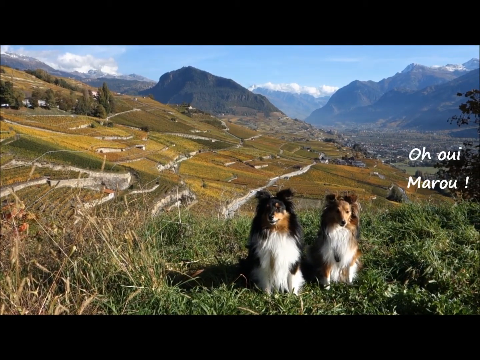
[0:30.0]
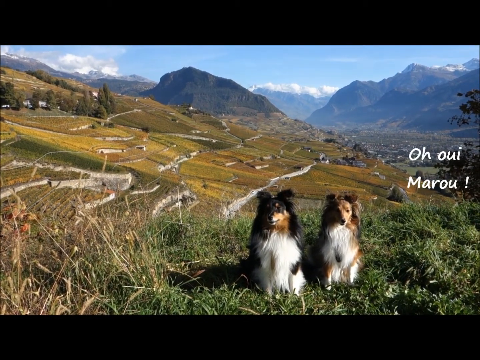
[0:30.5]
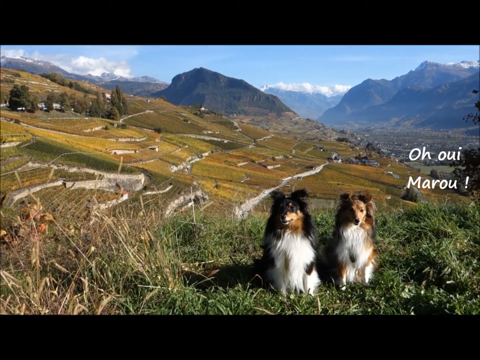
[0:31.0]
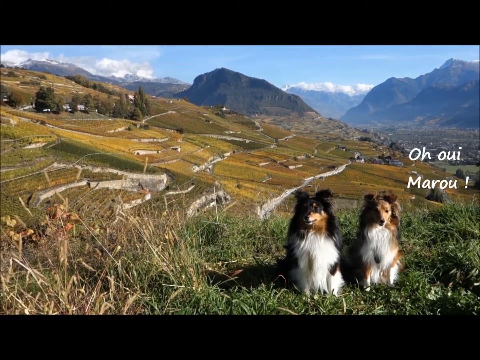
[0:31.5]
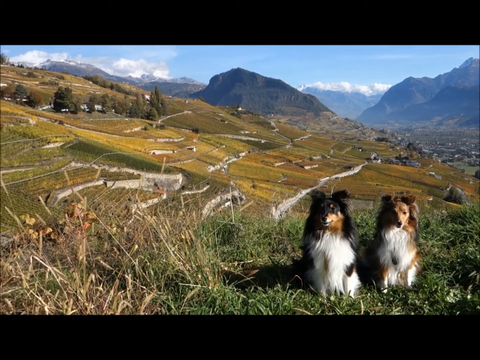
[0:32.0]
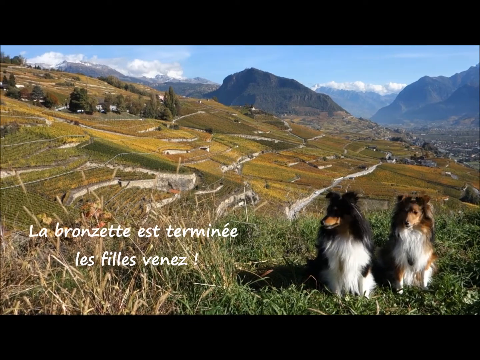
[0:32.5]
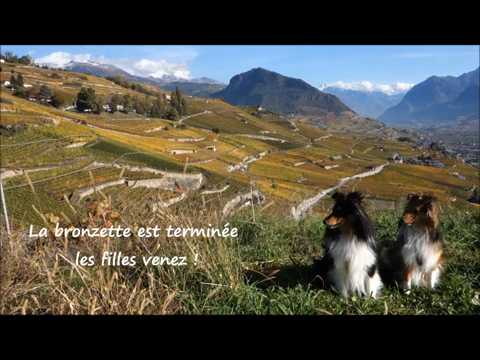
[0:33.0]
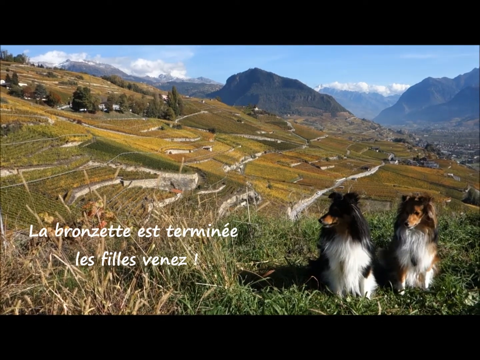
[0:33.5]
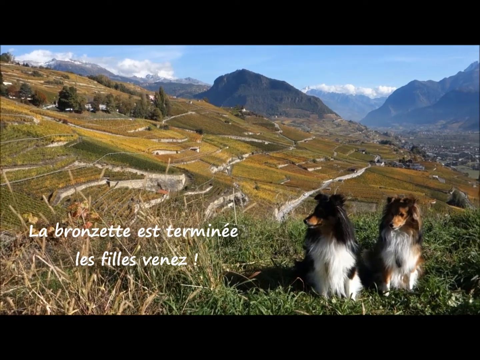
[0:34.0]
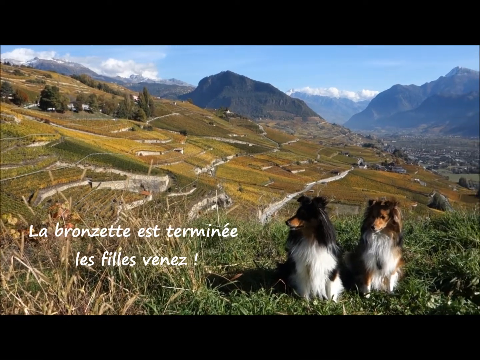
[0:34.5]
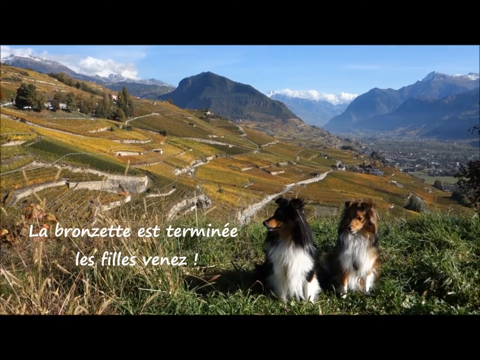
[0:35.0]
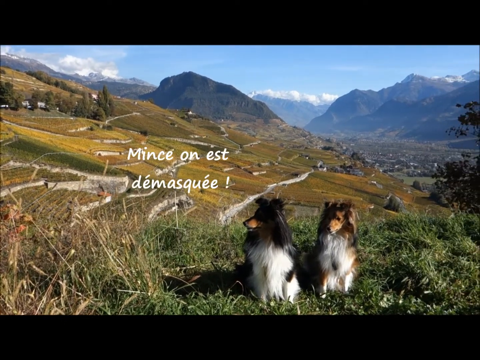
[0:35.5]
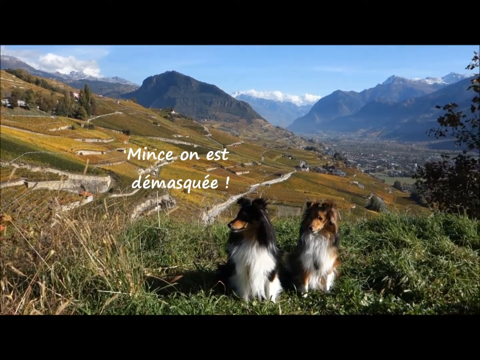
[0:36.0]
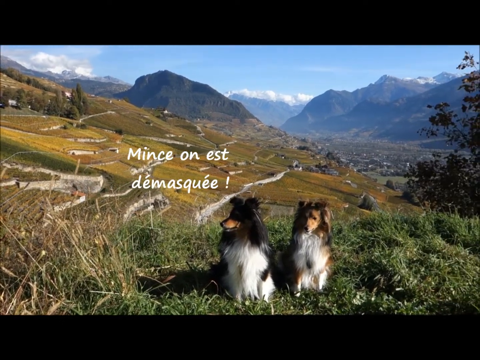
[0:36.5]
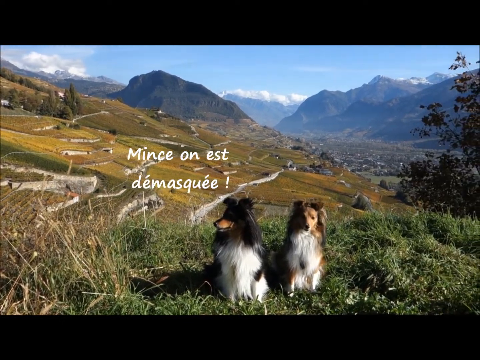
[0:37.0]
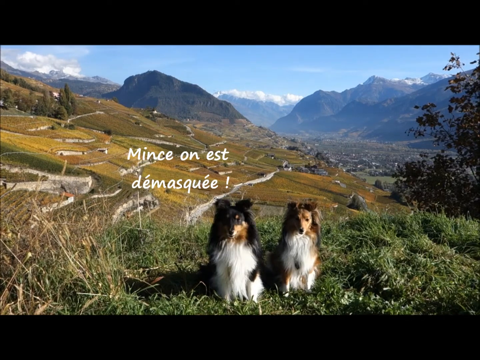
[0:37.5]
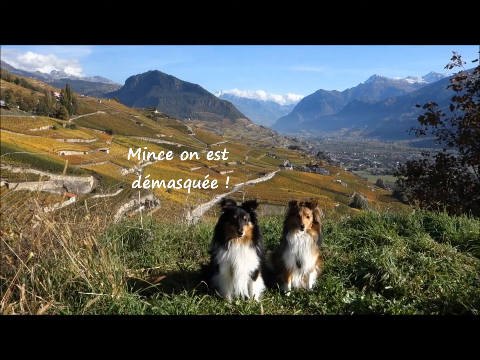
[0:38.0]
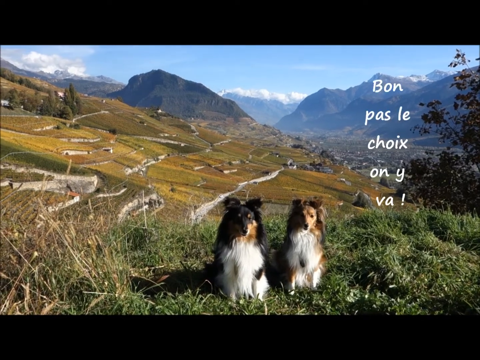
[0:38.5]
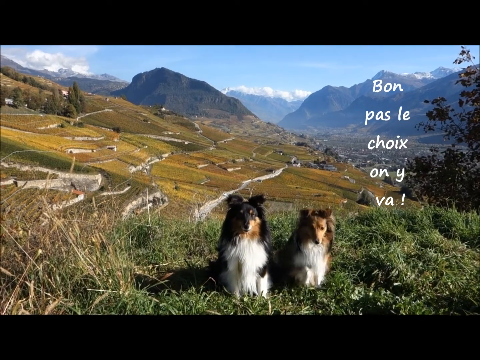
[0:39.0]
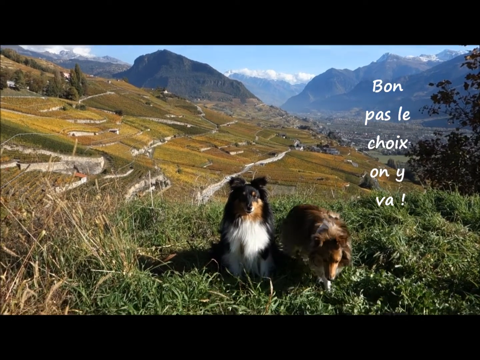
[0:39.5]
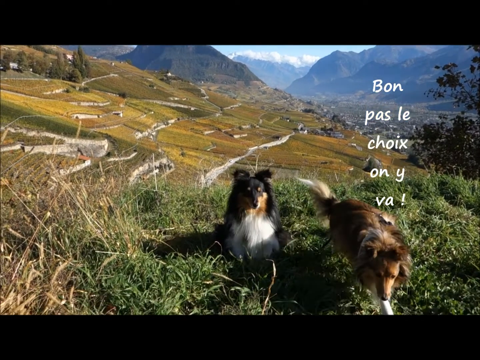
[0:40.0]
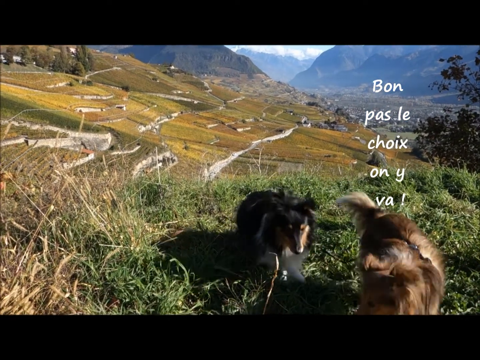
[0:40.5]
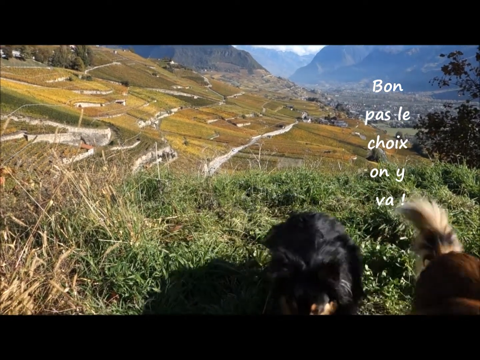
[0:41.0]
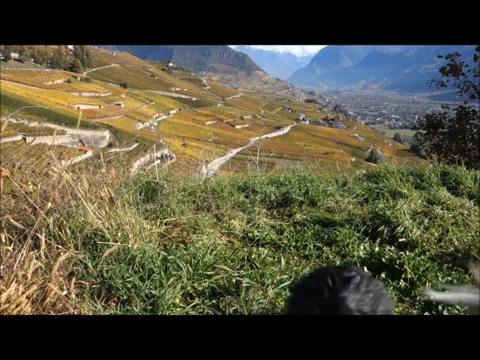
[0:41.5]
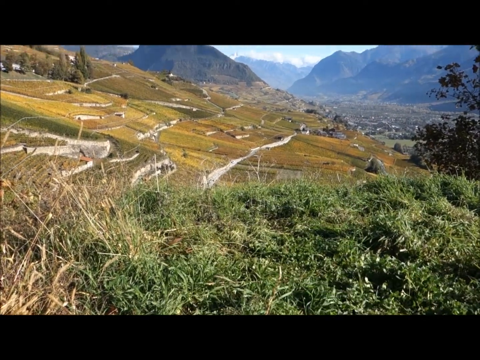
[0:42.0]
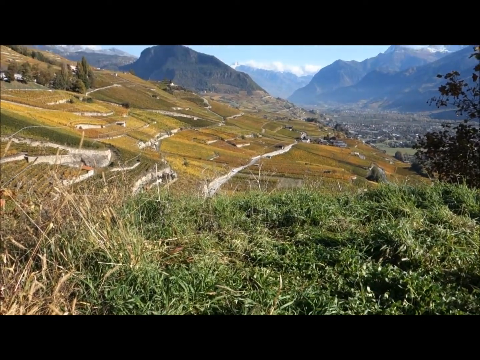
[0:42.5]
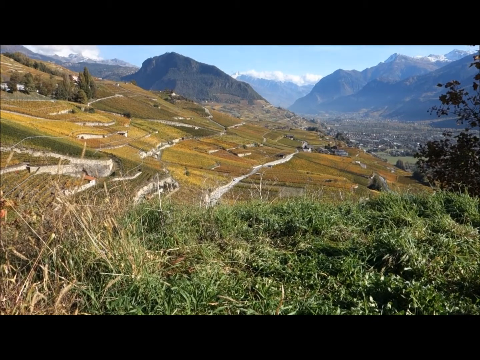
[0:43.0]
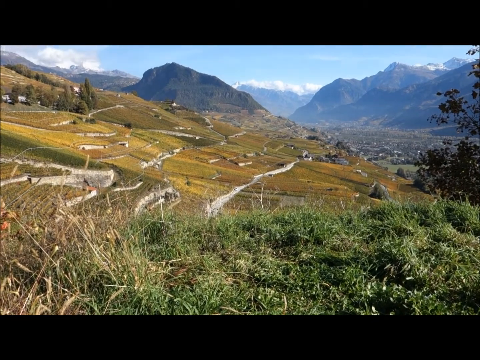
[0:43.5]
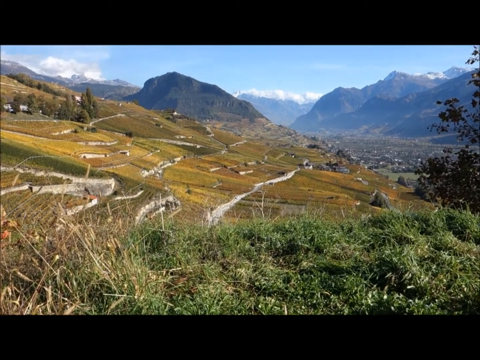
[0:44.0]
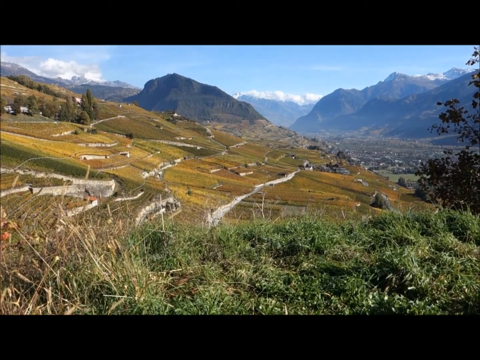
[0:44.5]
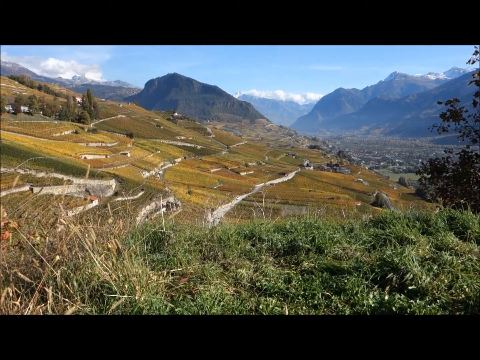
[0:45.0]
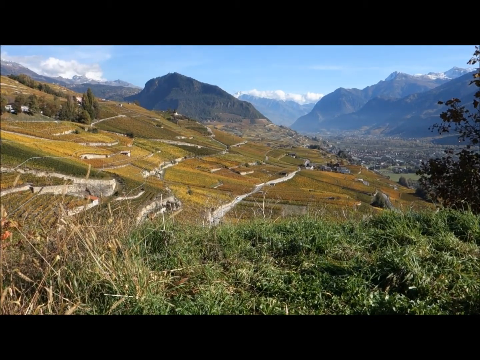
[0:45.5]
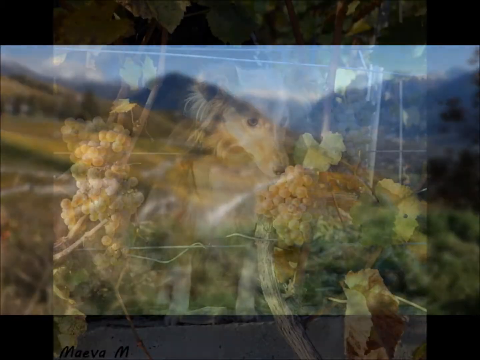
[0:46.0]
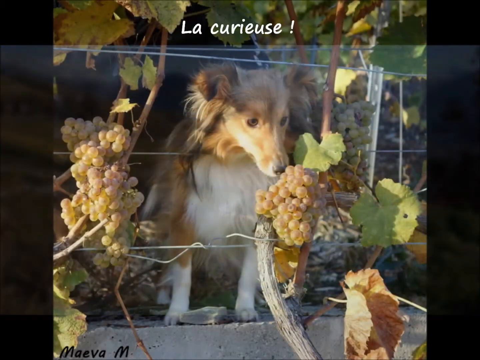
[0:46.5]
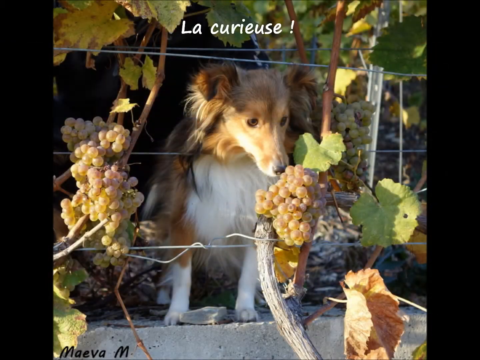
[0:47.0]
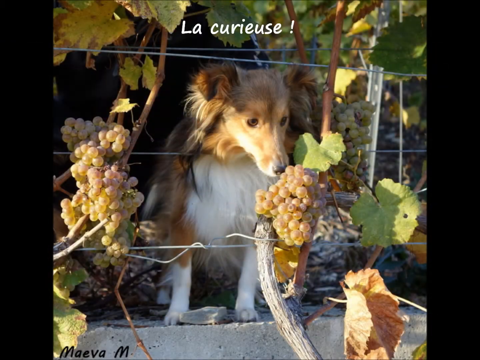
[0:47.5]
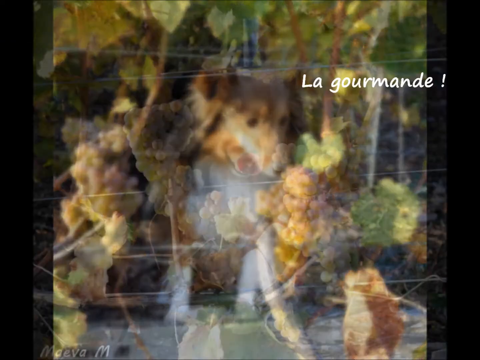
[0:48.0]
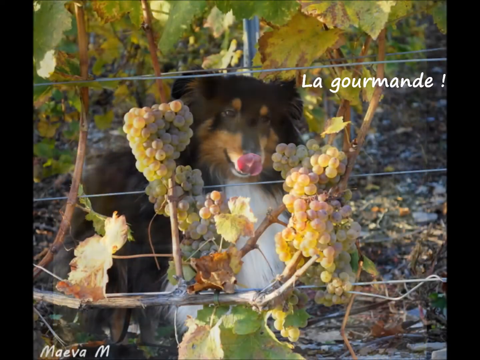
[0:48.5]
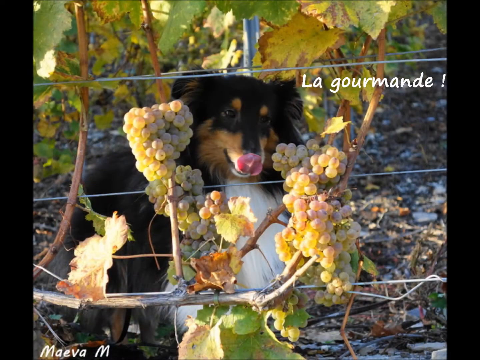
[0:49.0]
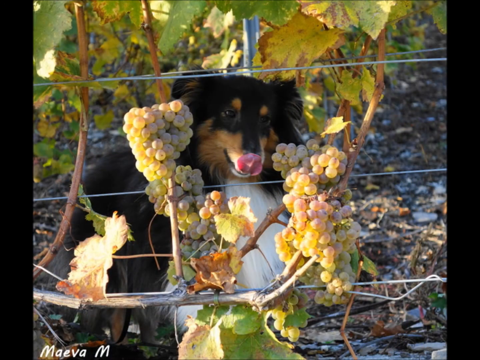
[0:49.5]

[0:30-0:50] The two dogs, mini collies, sit together on a hill in front of a green landscape with paths cut into it, with part of the winery and vineyards in the background. Some French text on the screen disappears, and then more French appears in white letters, with different things popping up alongside exclamation points. The sky is still fairly blue with a few wispy clouds. One of the dogs gets up and walks toward the person filming, and the camera keeps filming the landscape and greenery for a moment as the dogs walk off. The video cuts to a picture of one dog sniffing grapes inside the vineyard, with the text "la curieuse". Another picture shows the other dog licking its lips and looking at the grapes, with the text "la gourmande".